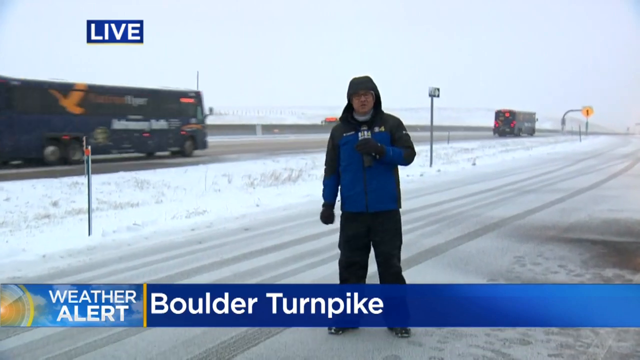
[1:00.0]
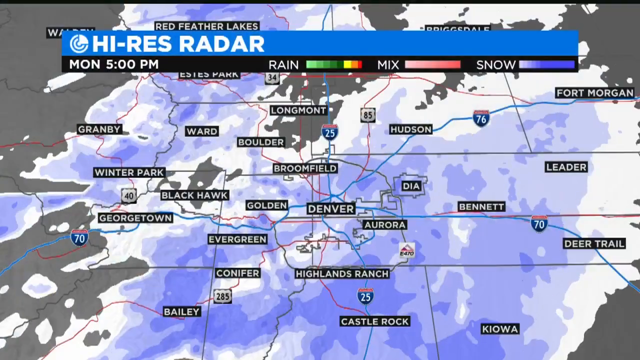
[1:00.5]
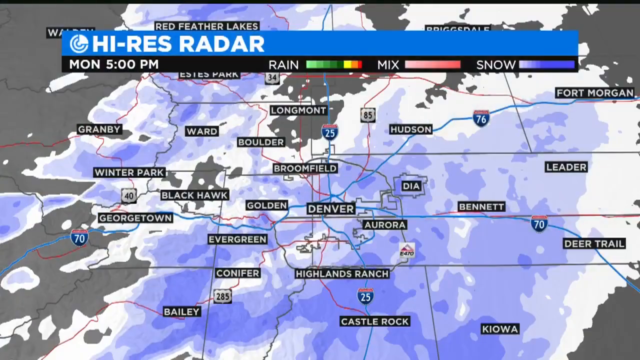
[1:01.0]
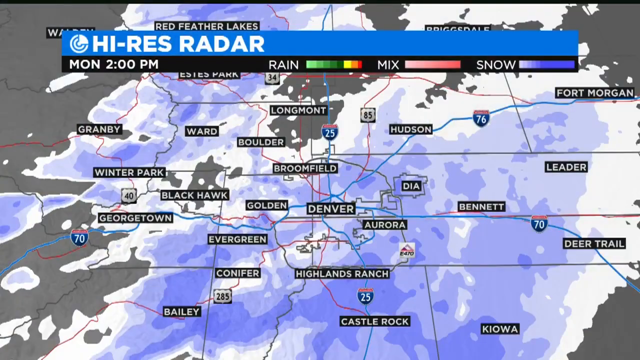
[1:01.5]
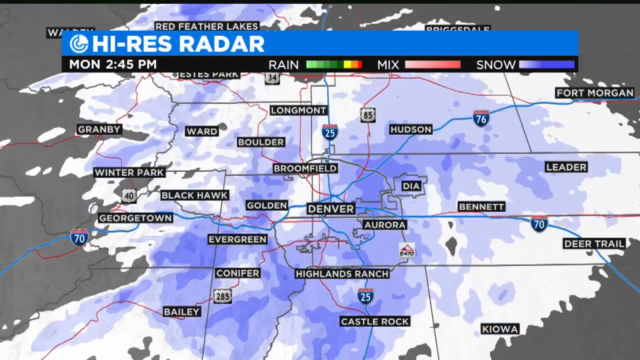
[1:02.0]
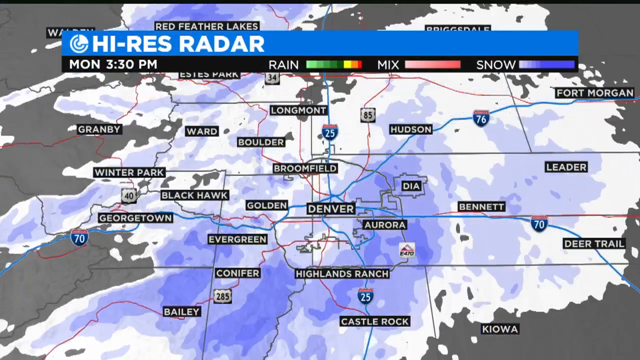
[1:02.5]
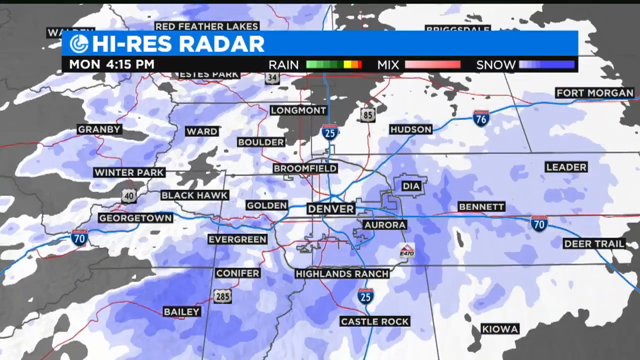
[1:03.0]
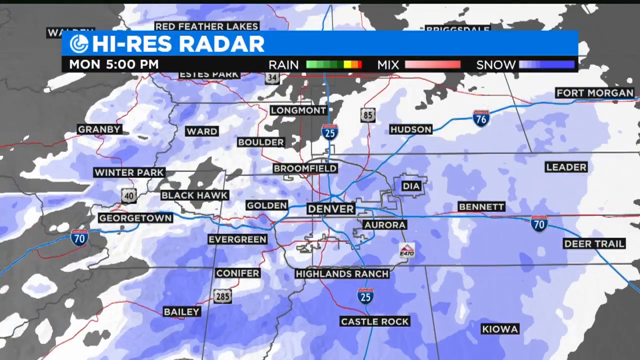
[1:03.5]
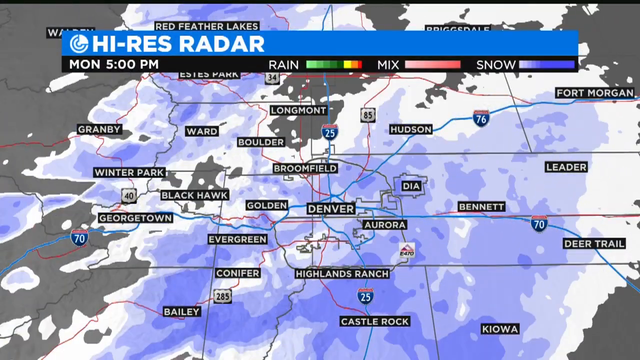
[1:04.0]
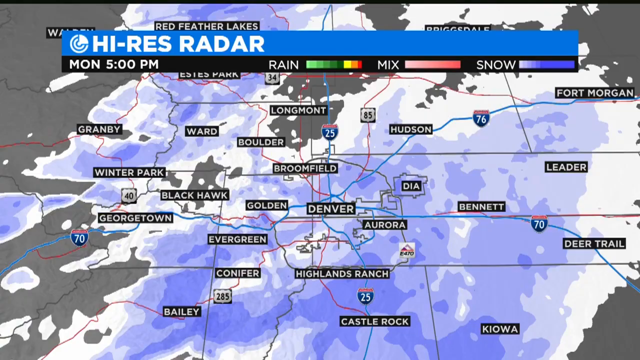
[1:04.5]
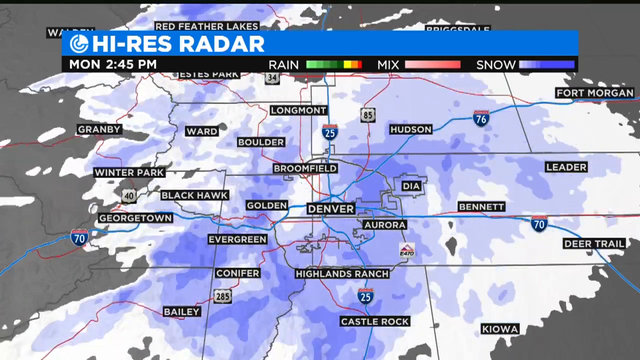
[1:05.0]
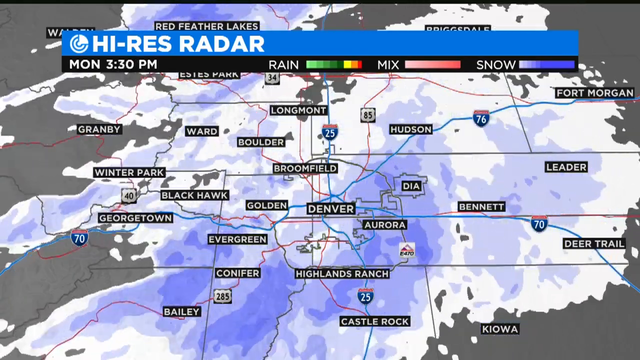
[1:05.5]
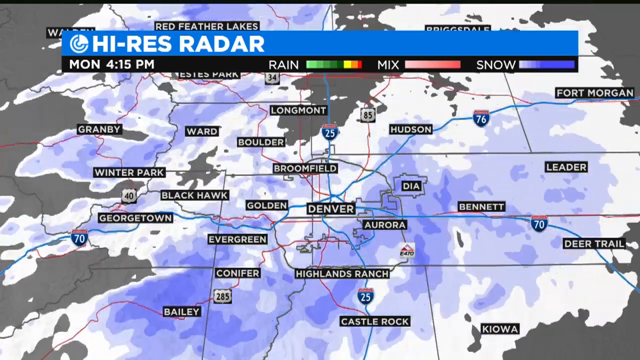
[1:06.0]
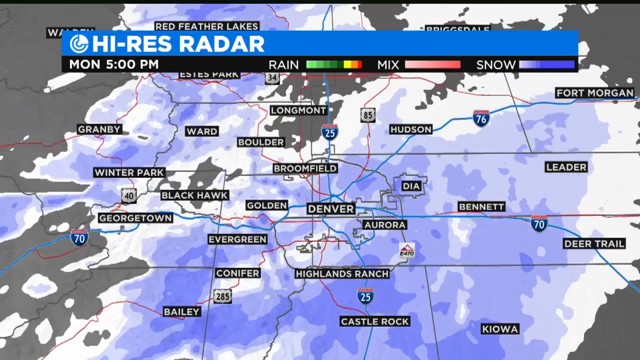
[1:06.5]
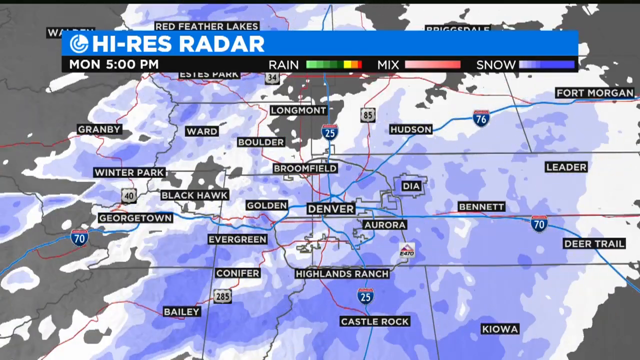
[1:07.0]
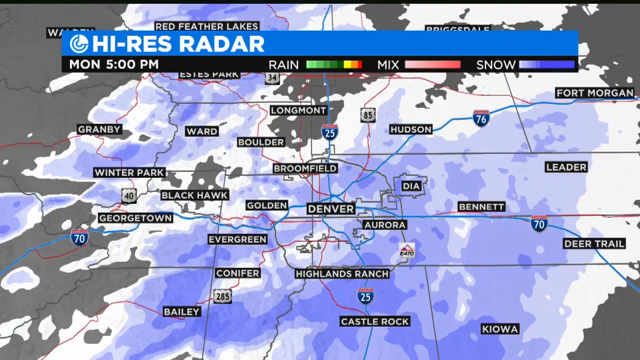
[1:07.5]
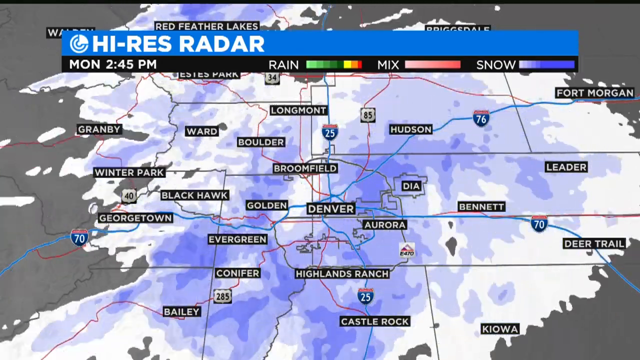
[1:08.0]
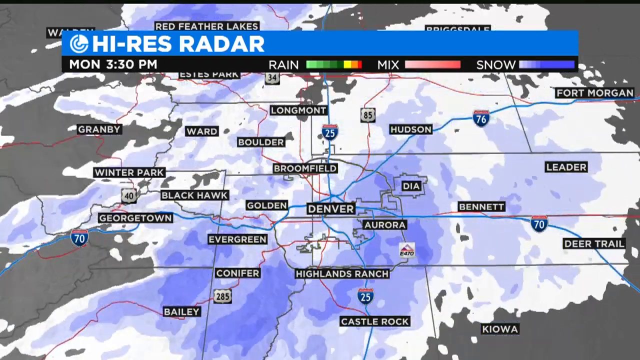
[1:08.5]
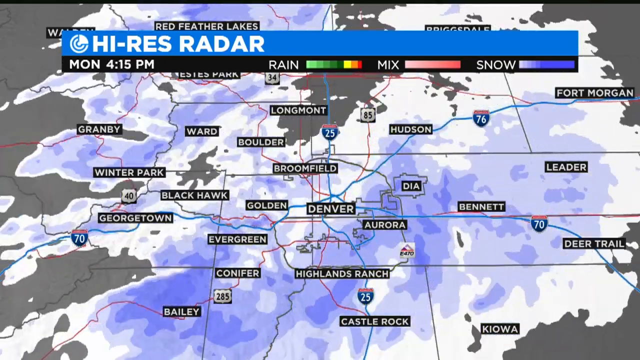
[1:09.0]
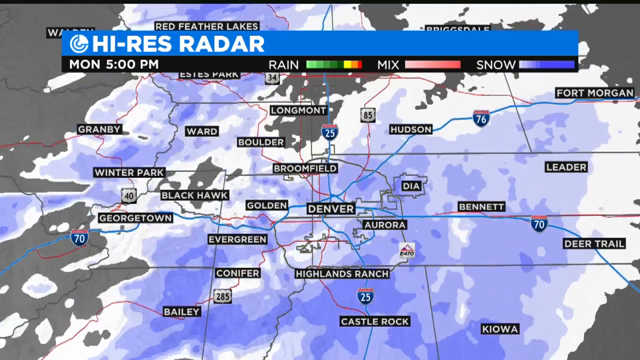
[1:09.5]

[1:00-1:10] What appears to be a live weather report shows a man outside, a weather reporter, holding a microphone with the CBS logo on it. He stands out on the road in a Columbia jacket that is blue with black sleeves, with a black hood, black pants and black gloves. It is snowing, and quite a bit of snow covers the ground. The sky is kind of white. Some cars and buses drive by in the back, but the road is mostly empty. The text at the bottom reads "weather alert" and "Boulder Turnpike", and "live" appears at the top left. The view then switches to a high-res radar of the whole area, which looks like it is around Denver, with the text "Monday, 5 p.m." White and blue cover the radar, probably indicating snow according to the legend at the top; the radar shows snow around Denver at this time.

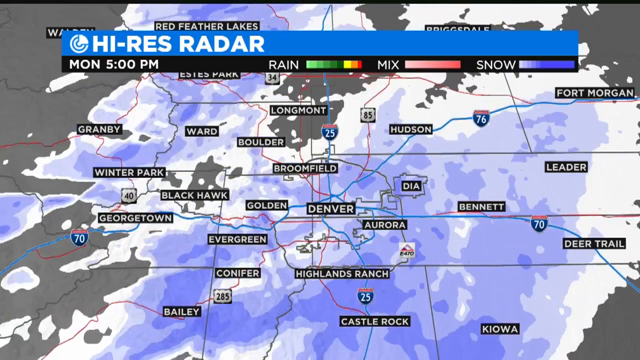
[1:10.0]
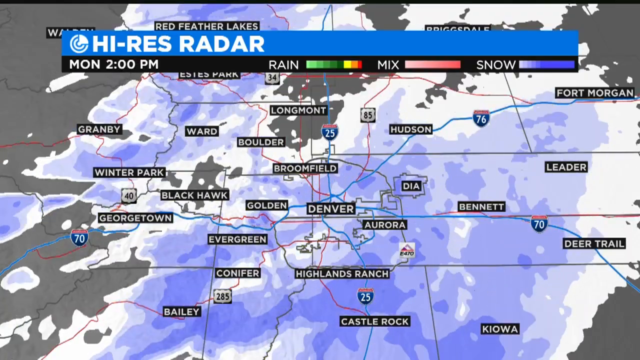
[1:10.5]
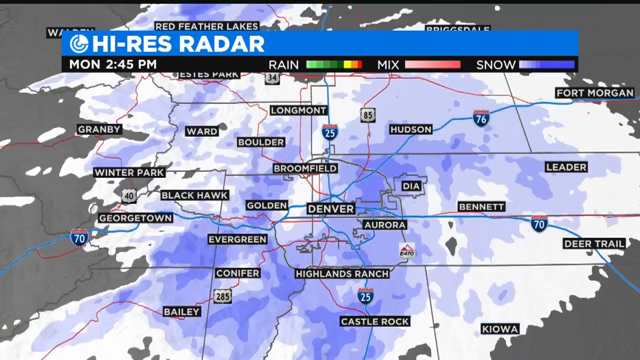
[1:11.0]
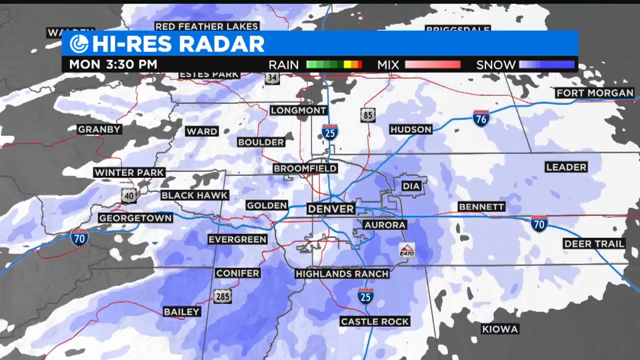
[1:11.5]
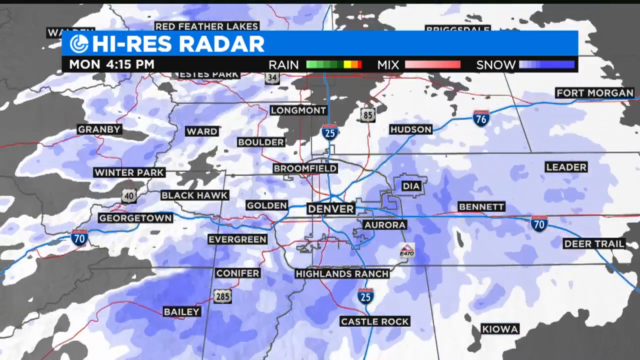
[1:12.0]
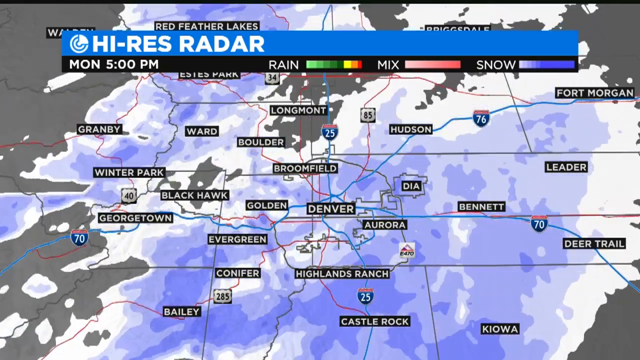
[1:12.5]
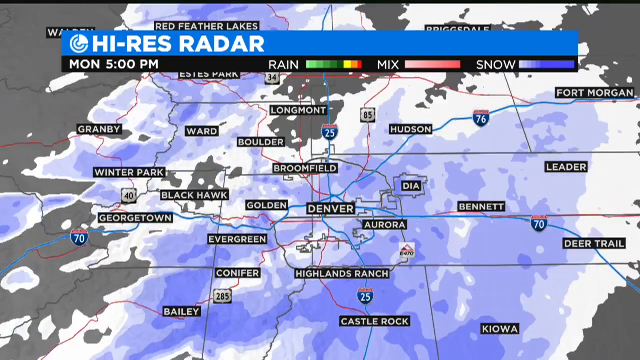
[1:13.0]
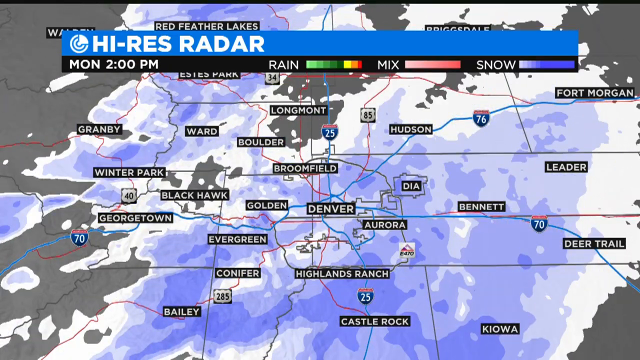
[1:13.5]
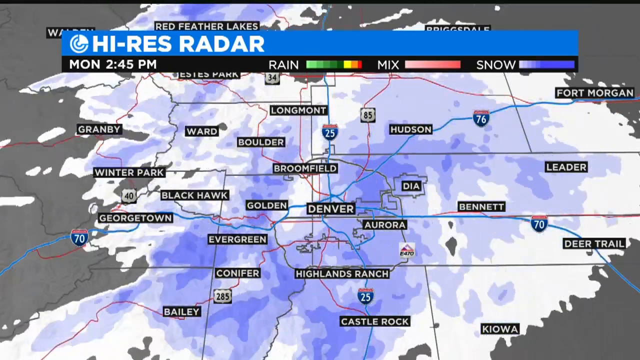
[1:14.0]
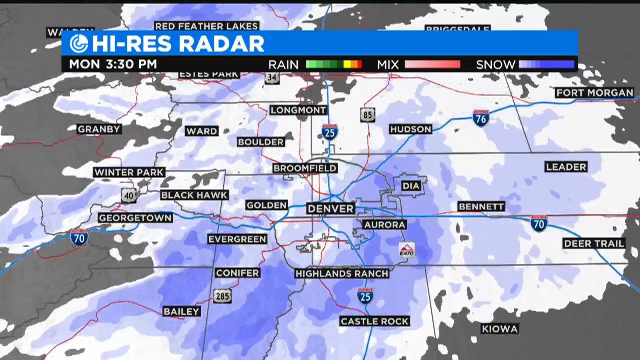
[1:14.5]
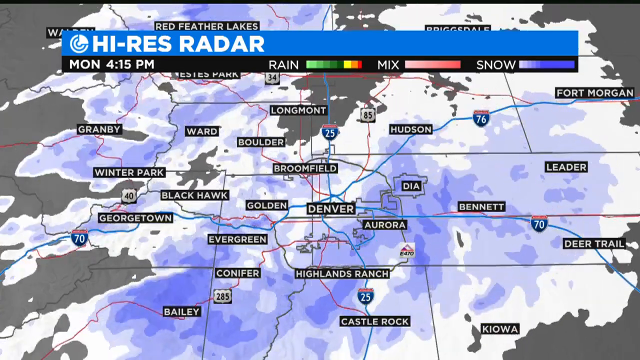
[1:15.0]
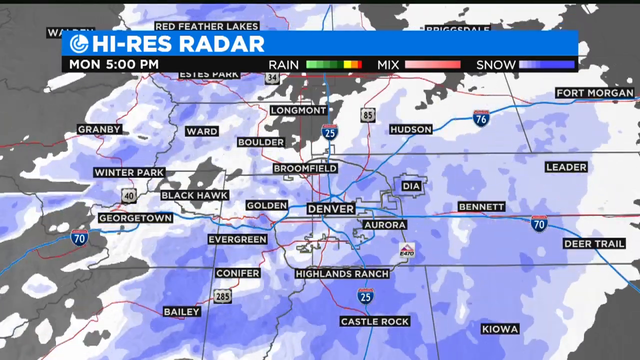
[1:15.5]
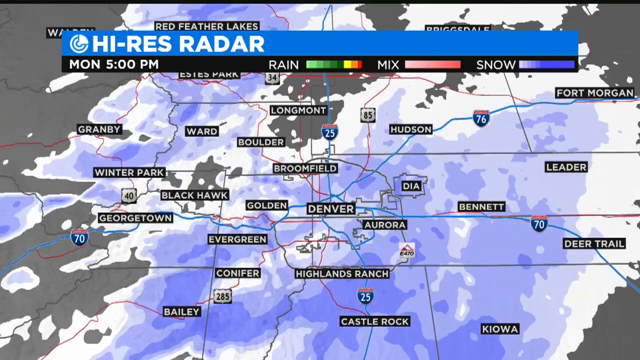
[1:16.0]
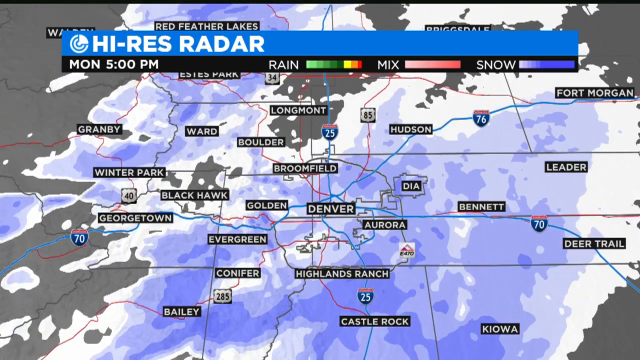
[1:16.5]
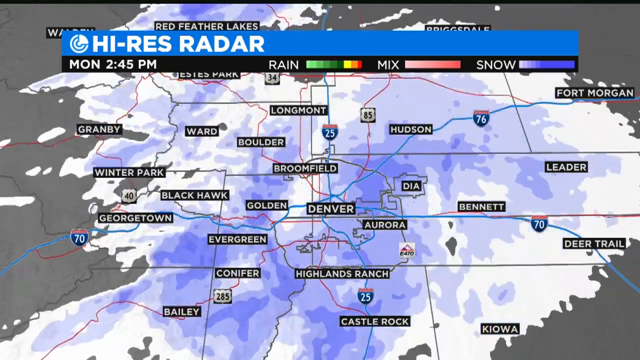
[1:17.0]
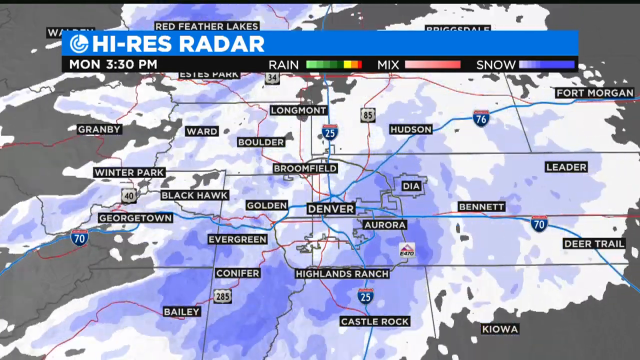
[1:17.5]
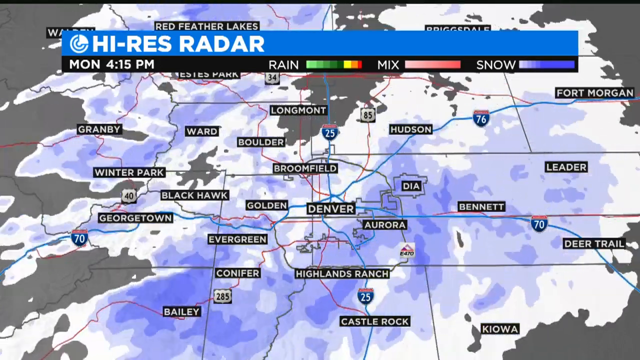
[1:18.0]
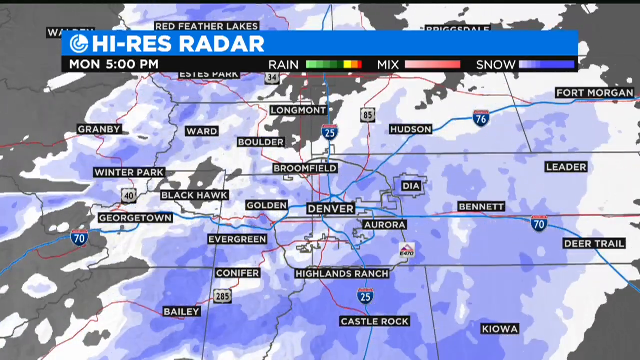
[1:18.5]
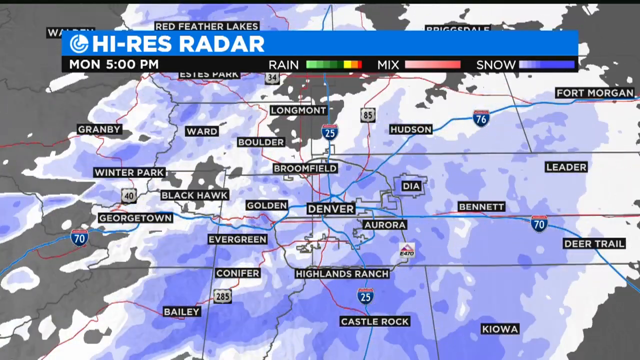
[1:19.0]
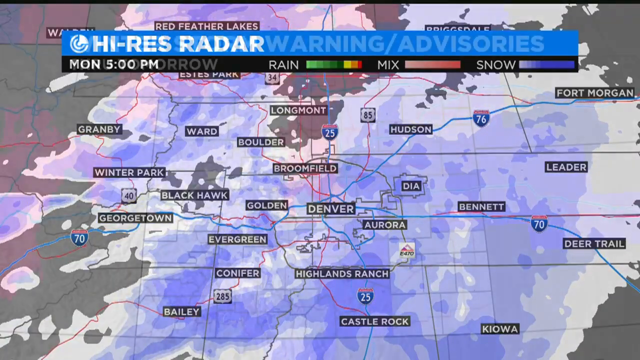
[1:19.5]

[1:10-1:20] A screen shows "high-res radar" at the top in white on a blue background, with "Monday" and "5 p.m." below it. A small legend covers rain, mix and snow: rain ranges from green, yellow and orange to red, mix from white to red, and snow is white or blue. The map shows the area around Denver, with a lot of blue and white across it, and the view kind of rotates throughout Denver. It looks like it is snowing there. The names of various cities appear on the map.